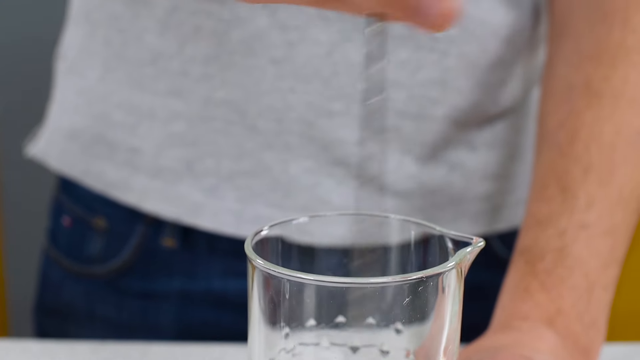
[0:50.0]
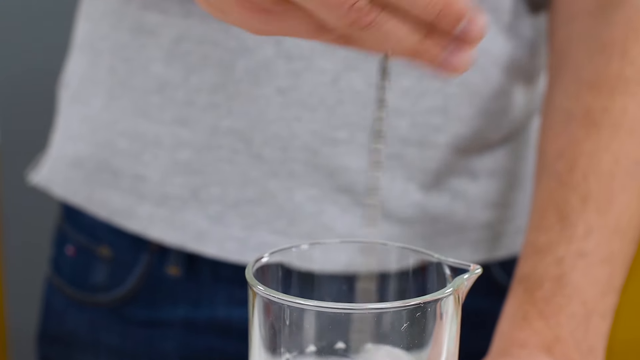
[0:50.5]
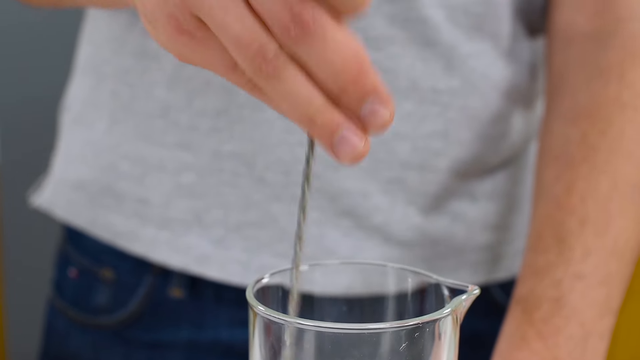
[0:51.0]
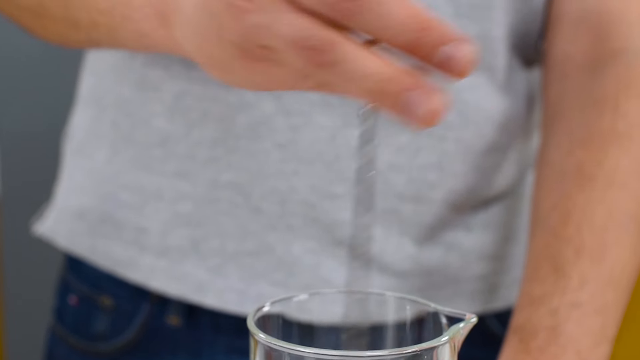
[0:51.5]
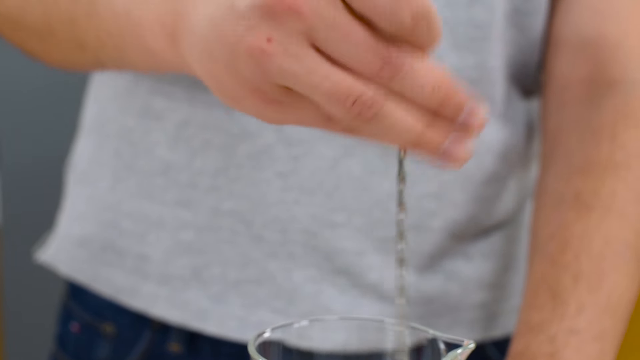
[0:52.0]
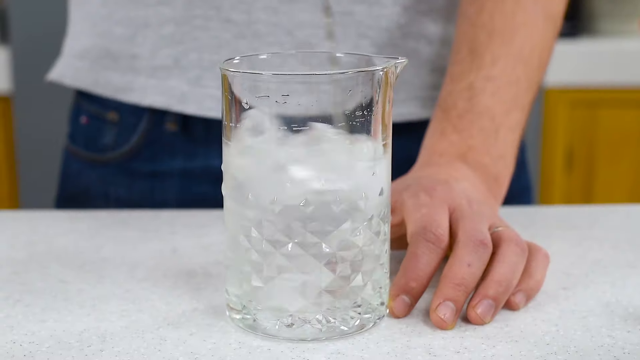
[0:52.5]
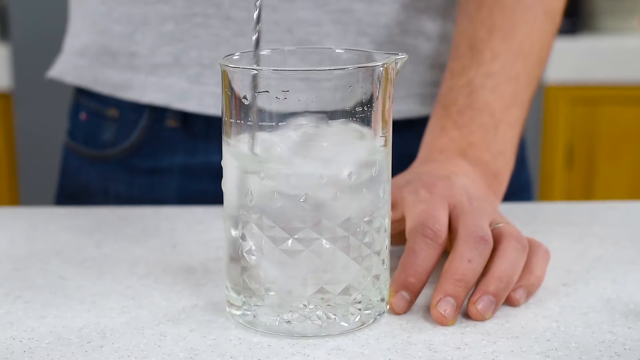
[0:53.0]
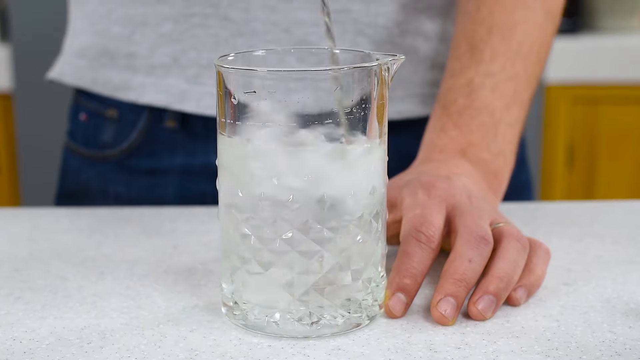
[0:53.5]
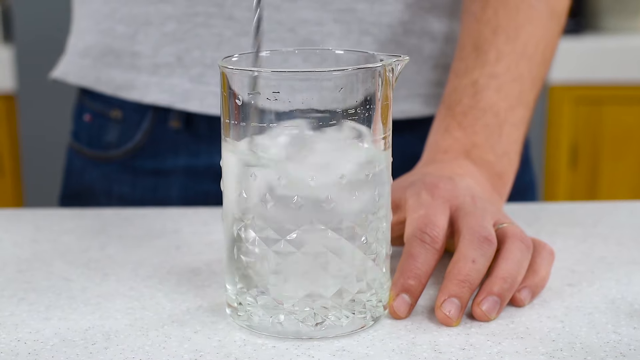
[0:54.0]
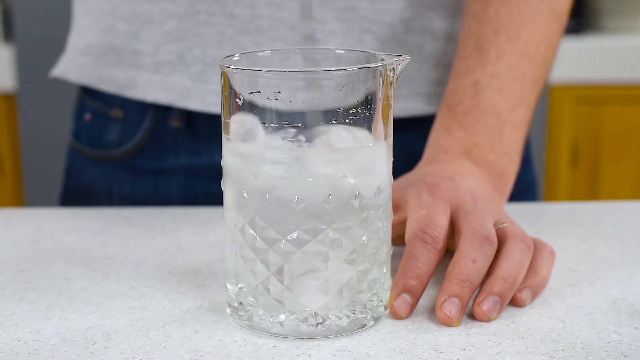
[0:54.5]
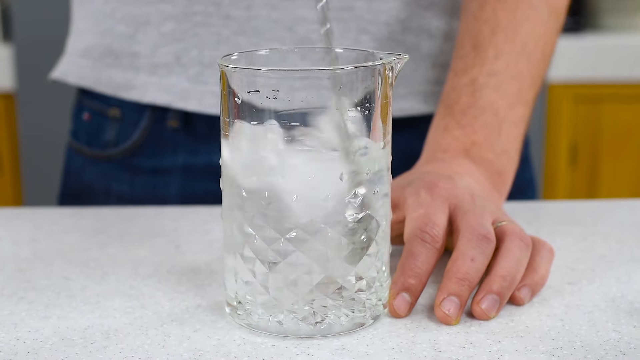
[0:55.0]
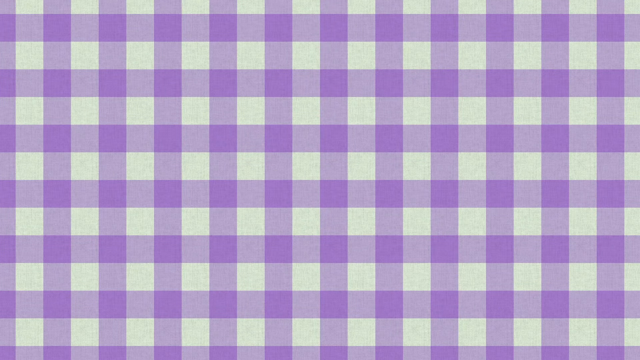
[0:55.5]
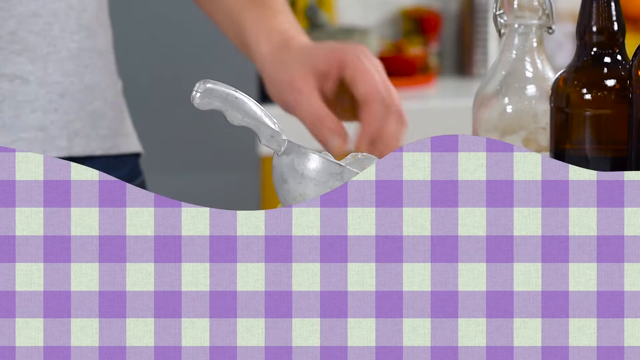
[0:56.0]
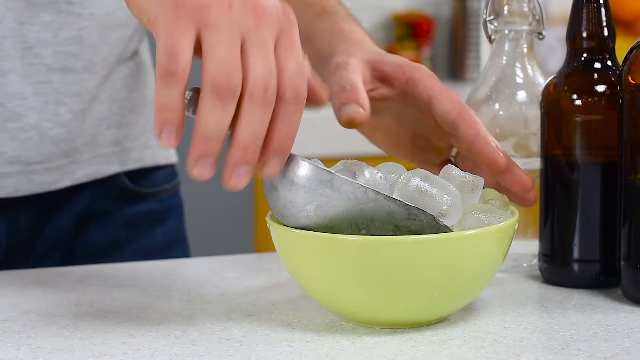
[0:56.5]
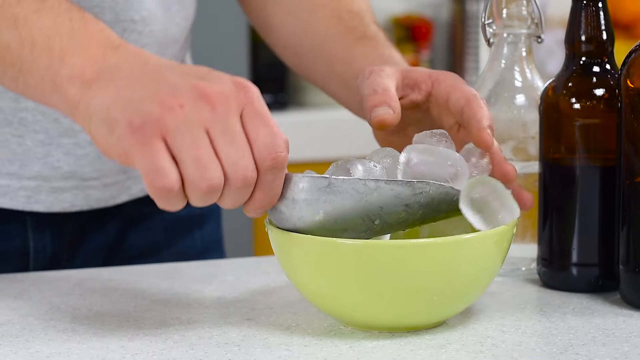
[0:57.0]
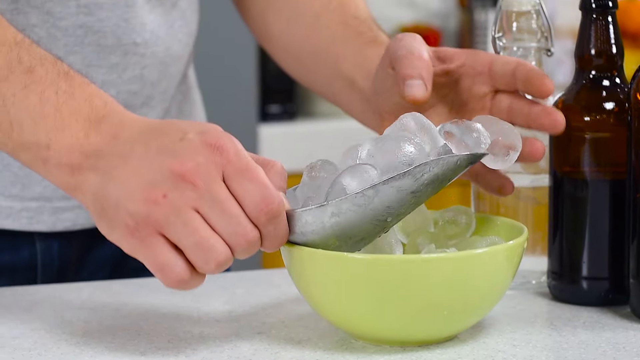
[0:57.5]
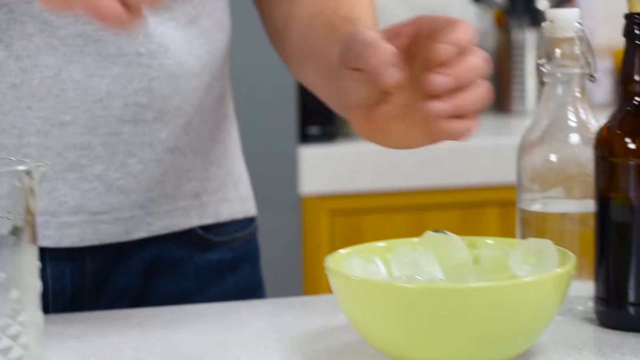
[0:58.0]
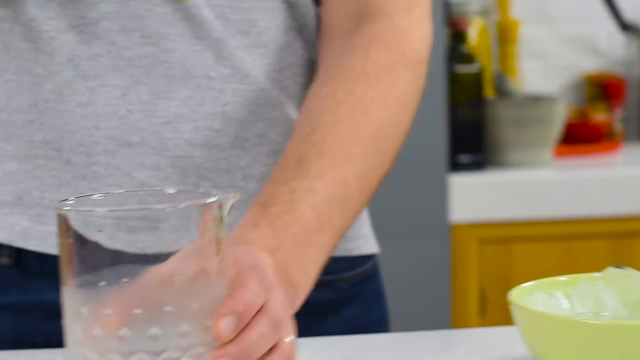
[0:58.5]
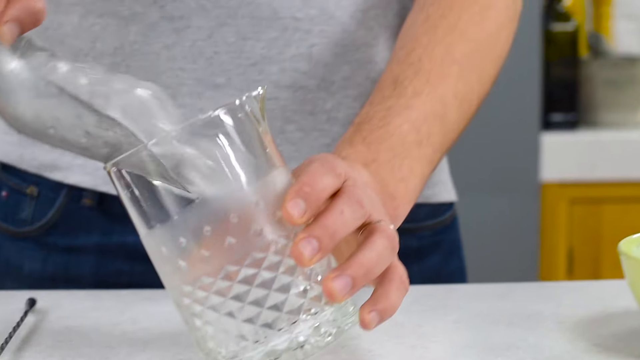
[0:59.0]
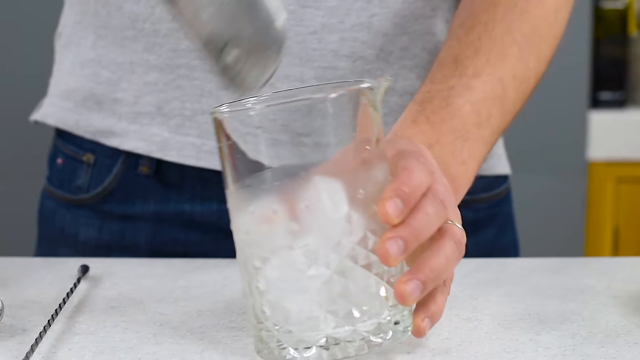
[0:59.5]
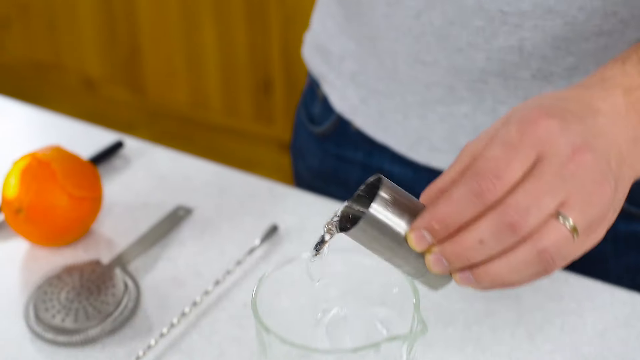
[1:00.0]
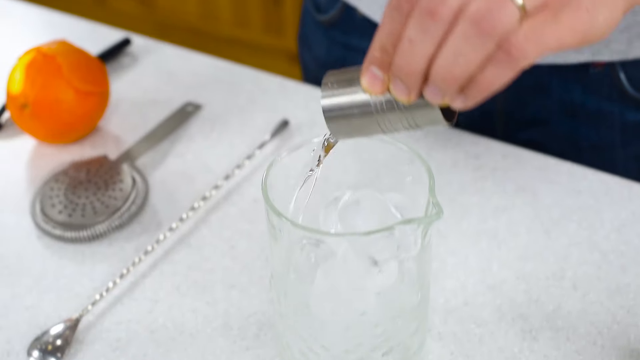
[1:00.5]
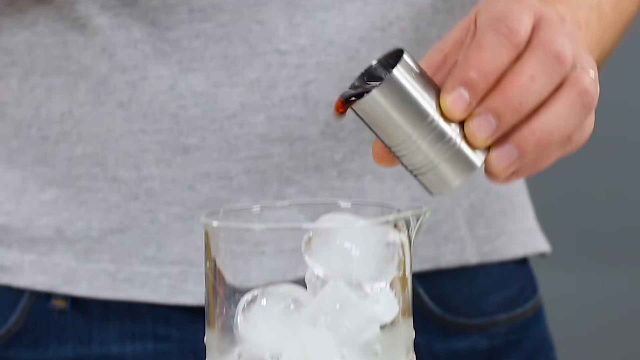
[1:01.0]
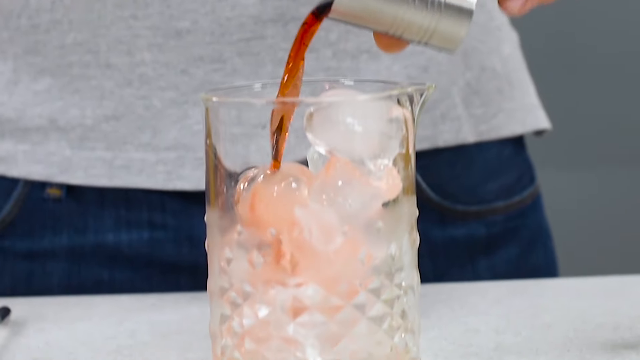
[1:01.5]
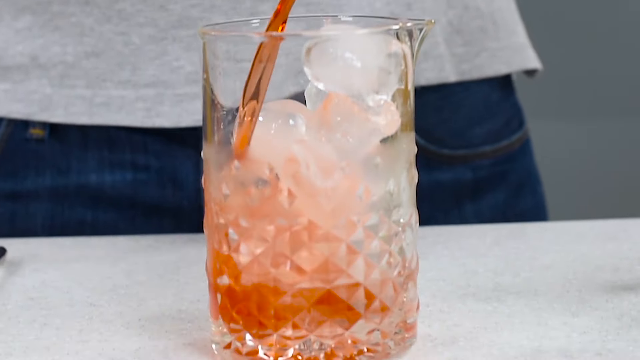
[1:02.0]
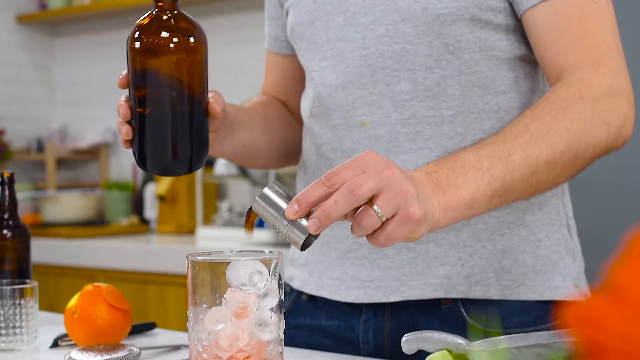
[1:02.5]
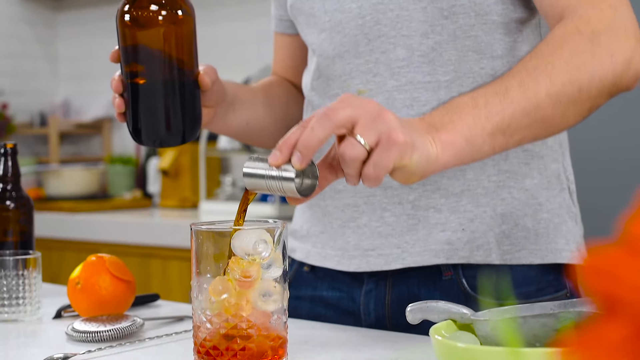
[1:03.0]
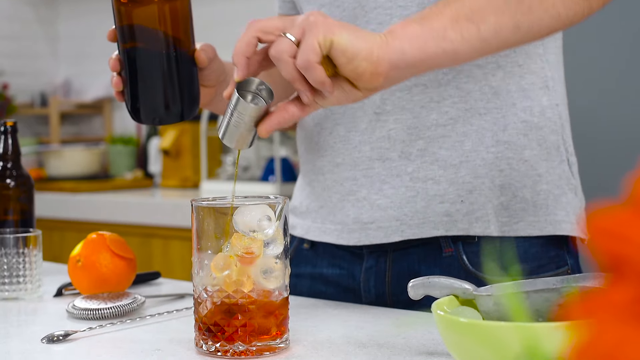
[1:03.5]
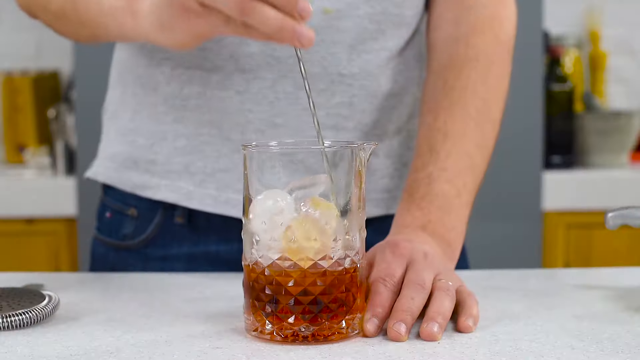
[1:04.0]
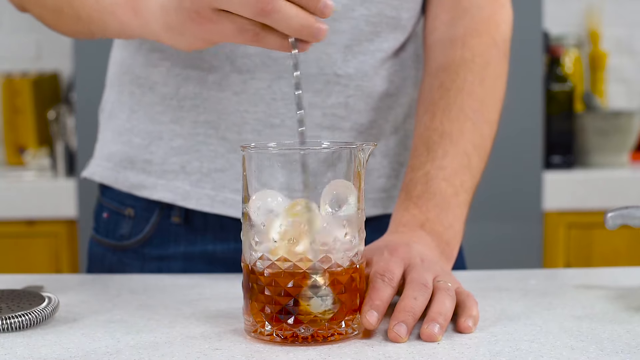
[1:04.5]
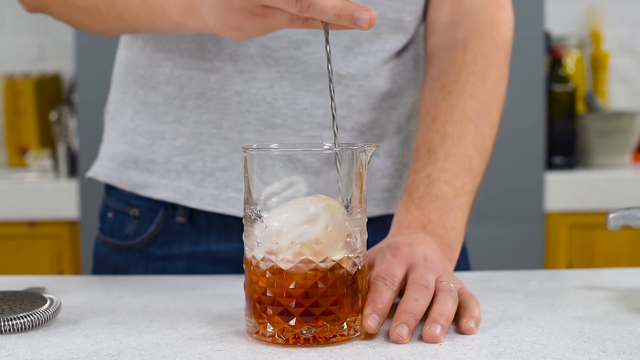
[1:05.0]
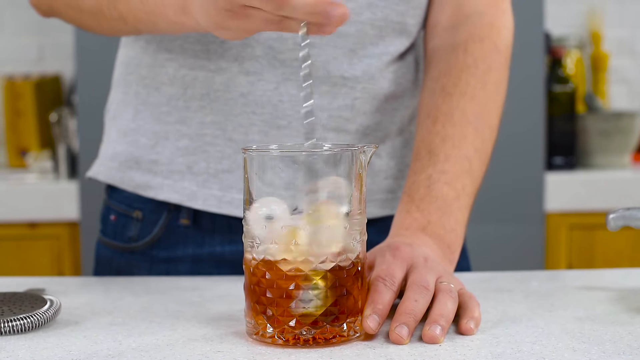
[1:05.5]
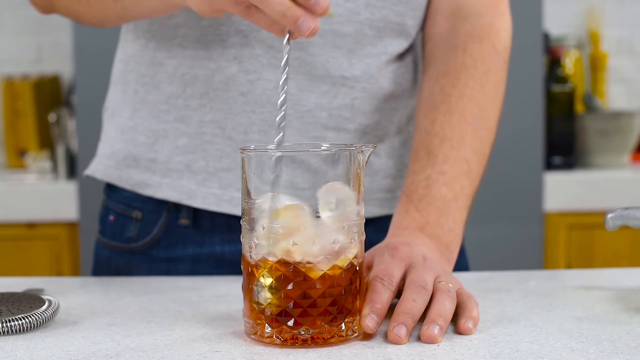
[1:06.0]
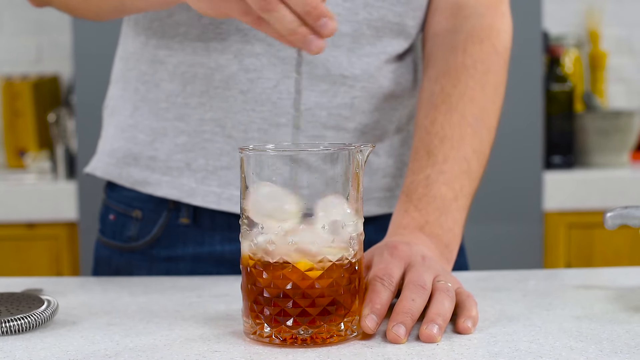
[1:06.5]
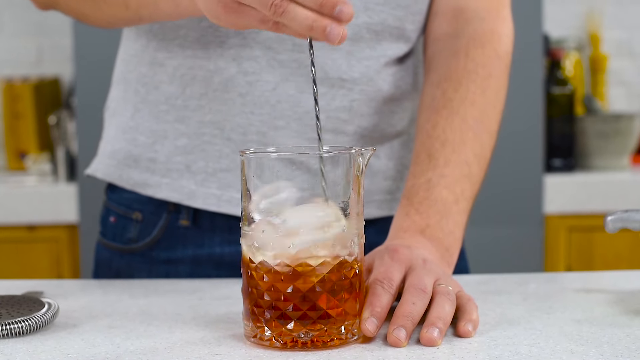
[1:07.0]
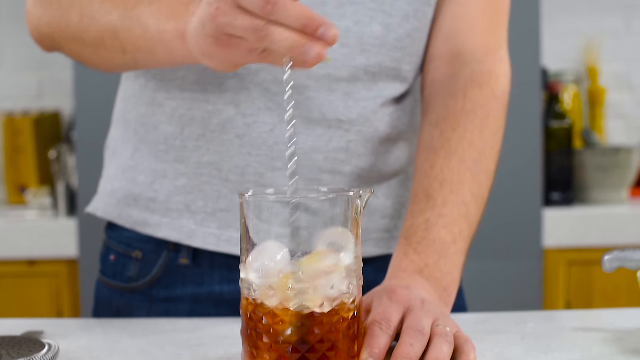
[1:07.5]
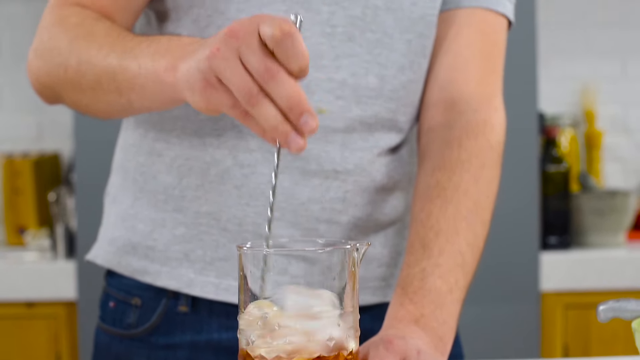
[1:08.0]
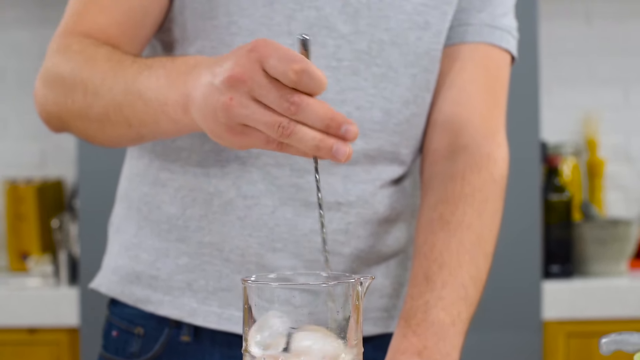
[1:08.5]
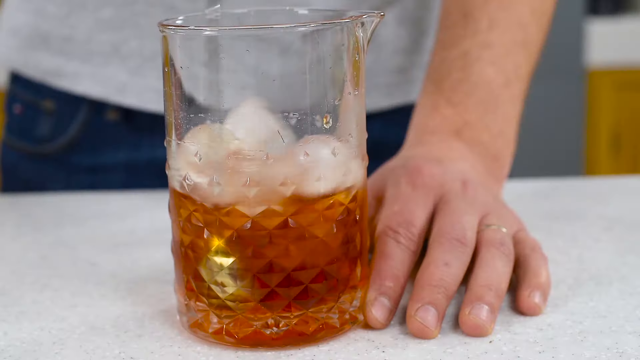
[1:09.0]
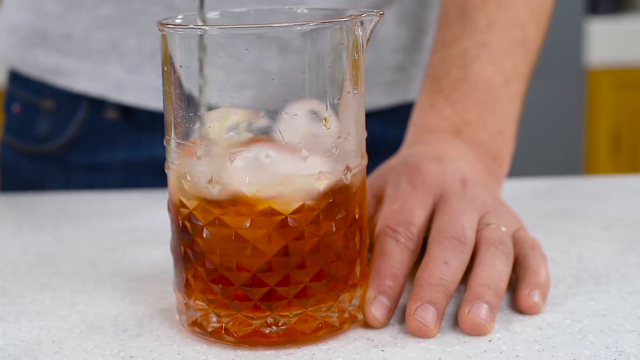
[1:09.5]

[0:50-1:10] A beaker with some ice and some clear liquid in it is stirred rapidly with a spoon; in the background are the waist of presumably a man and his hand holding the beaker. A short shot shows ice being poured into an empty beaker, then clear liquid is poured from a silver shot glass into the clear beaker with ice. To the side are an orange, what looks like a long-handled spoon, and what looks like a strainer, all on a white countertop, and the man's hand pours the liquid. The man then pours some orange-colored liquid into the glass beaker, and next some brown liquid, holding a brown bottle in his other hand. He then stirs the mixture in the glass beaker rapidly with a long silver spoon.